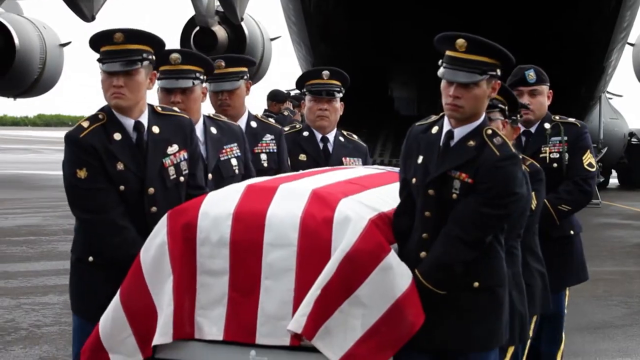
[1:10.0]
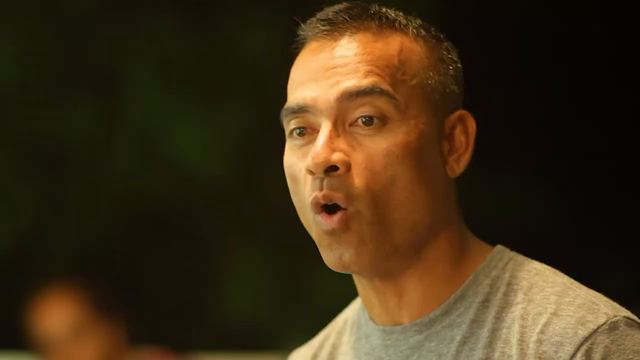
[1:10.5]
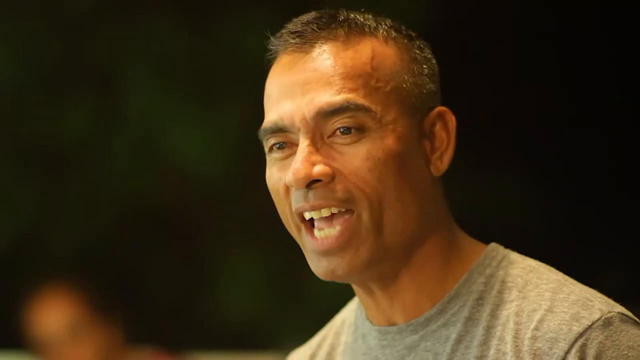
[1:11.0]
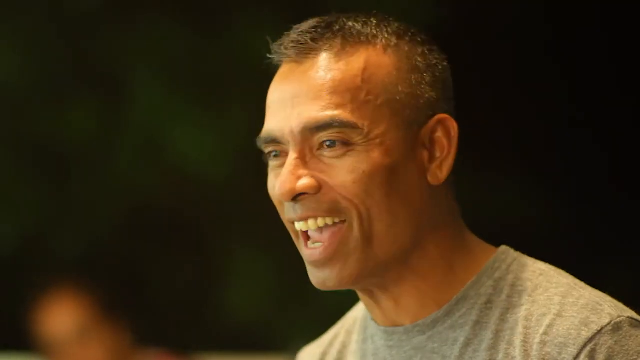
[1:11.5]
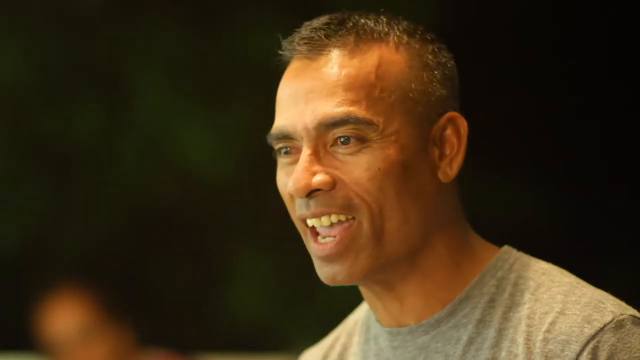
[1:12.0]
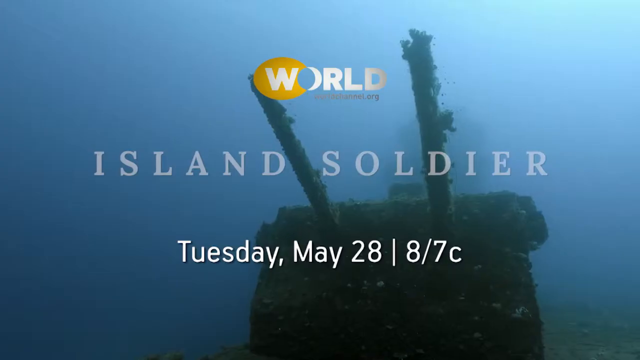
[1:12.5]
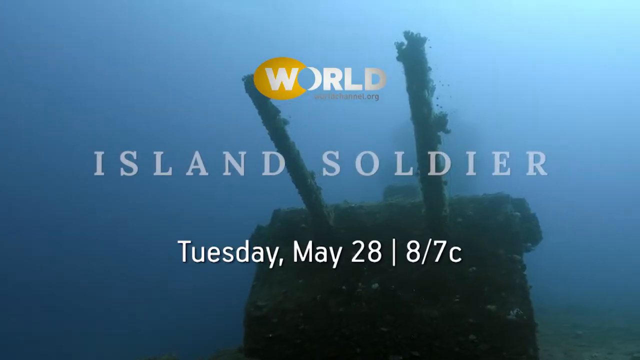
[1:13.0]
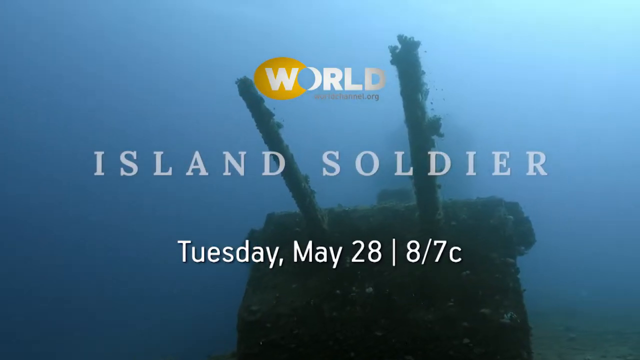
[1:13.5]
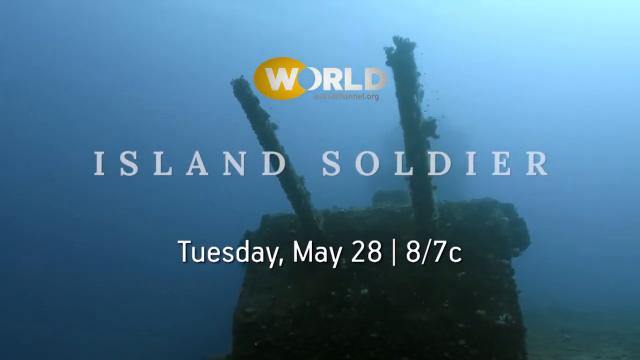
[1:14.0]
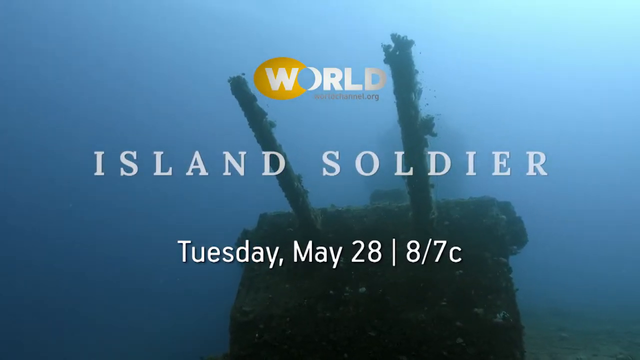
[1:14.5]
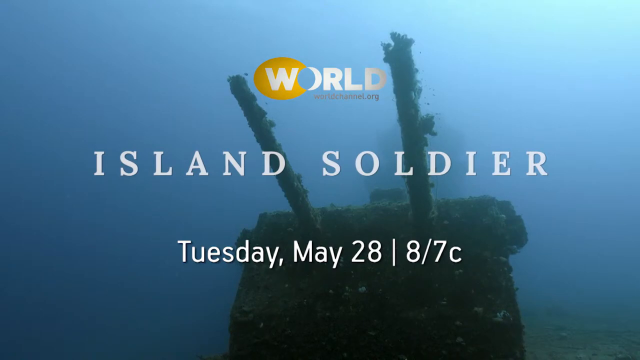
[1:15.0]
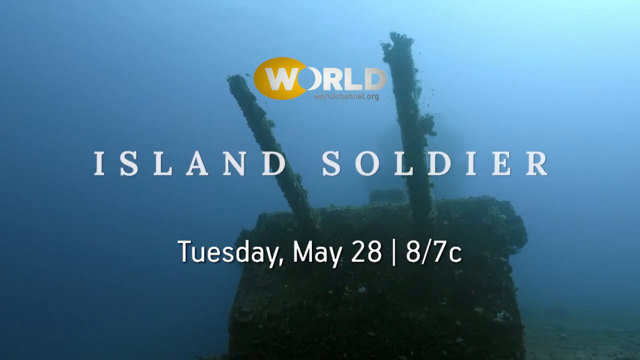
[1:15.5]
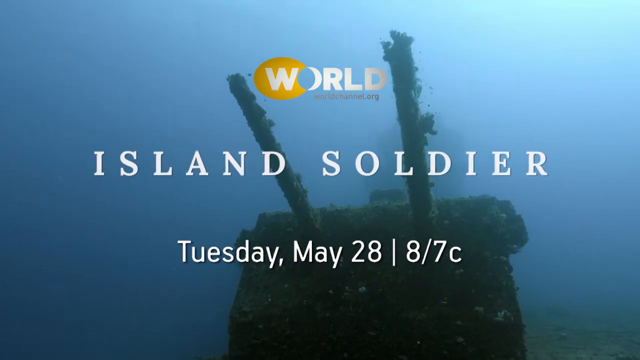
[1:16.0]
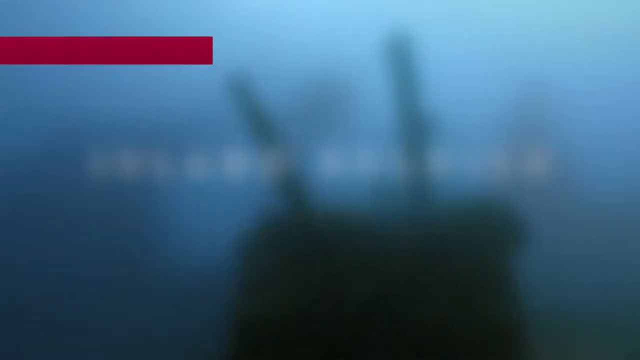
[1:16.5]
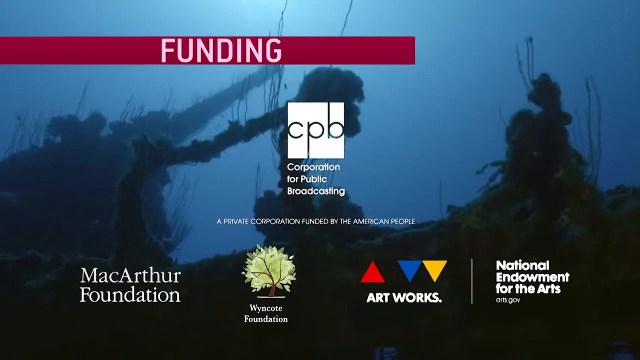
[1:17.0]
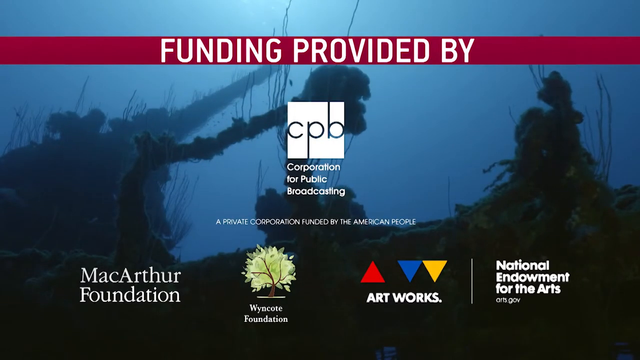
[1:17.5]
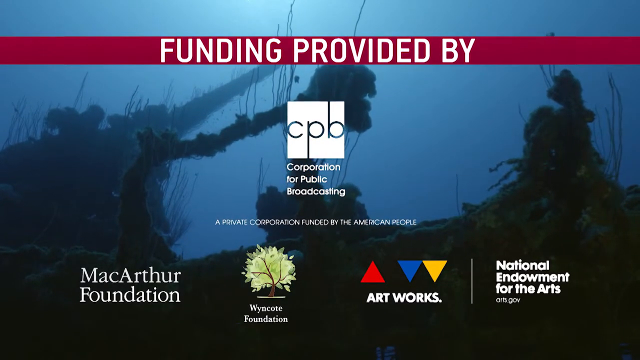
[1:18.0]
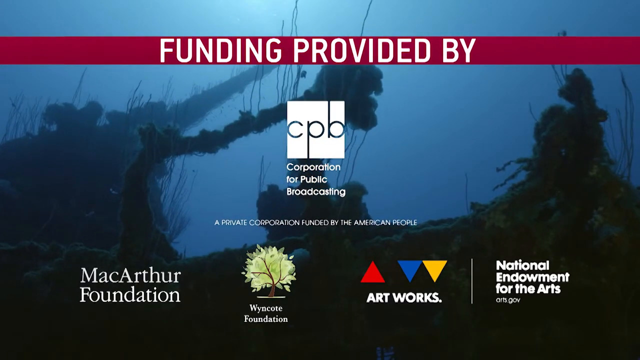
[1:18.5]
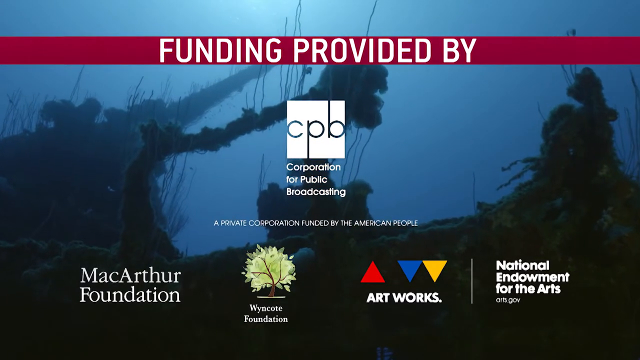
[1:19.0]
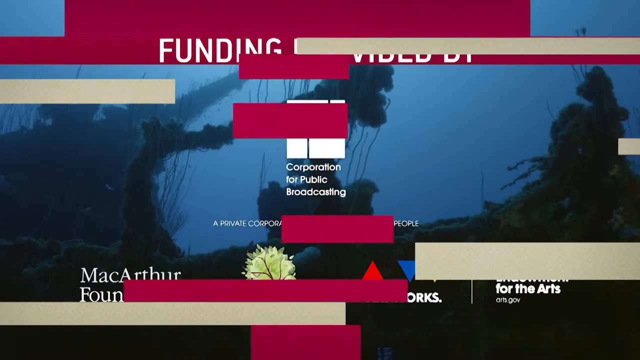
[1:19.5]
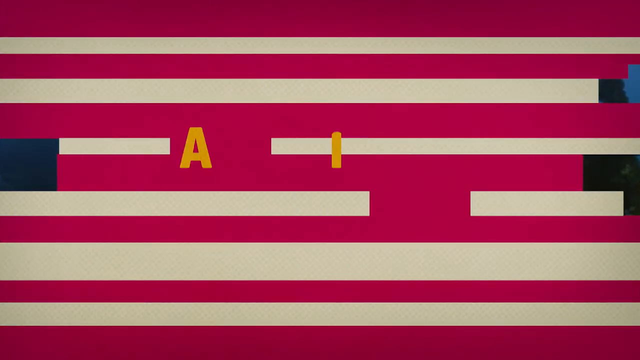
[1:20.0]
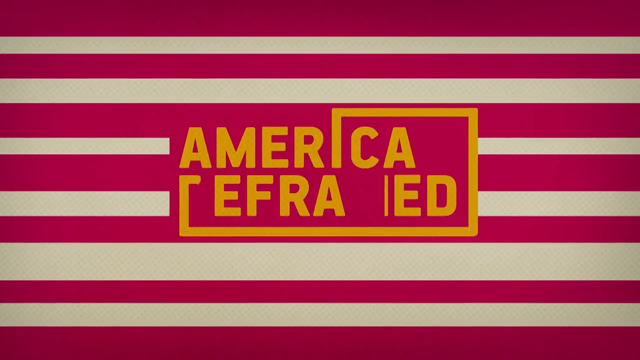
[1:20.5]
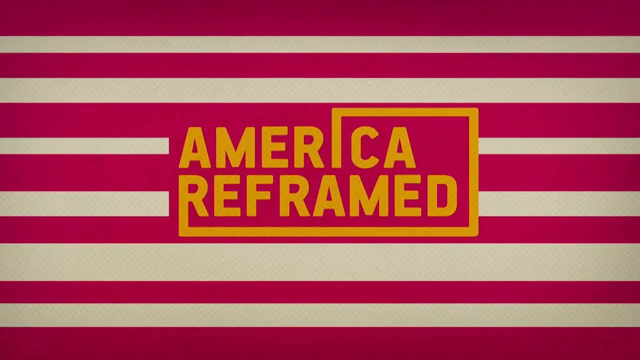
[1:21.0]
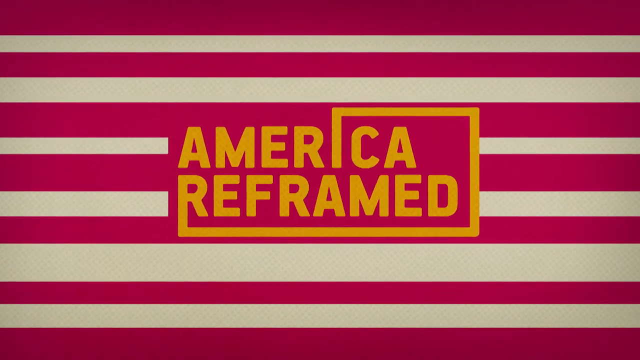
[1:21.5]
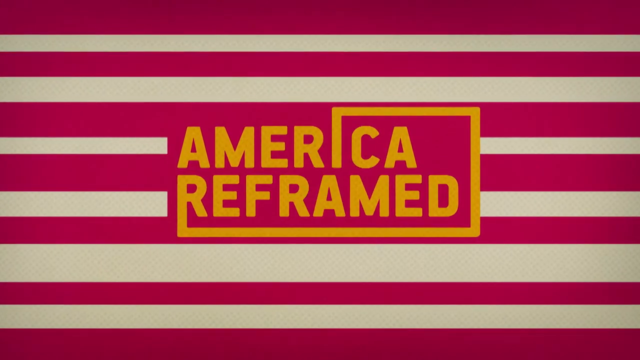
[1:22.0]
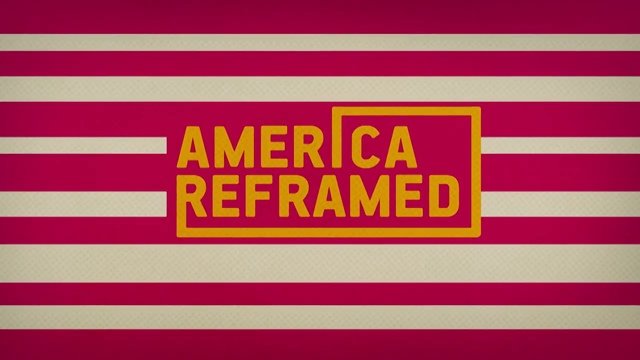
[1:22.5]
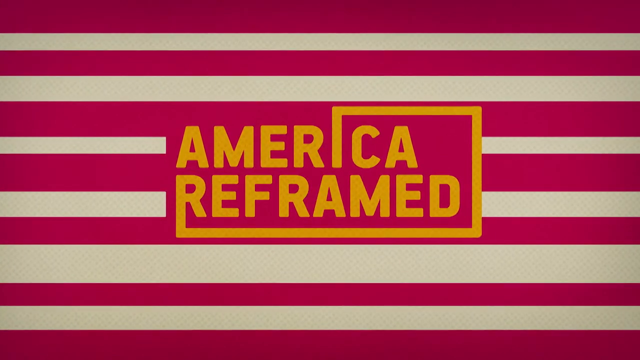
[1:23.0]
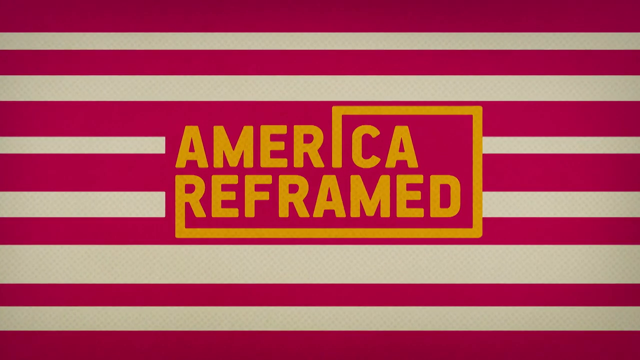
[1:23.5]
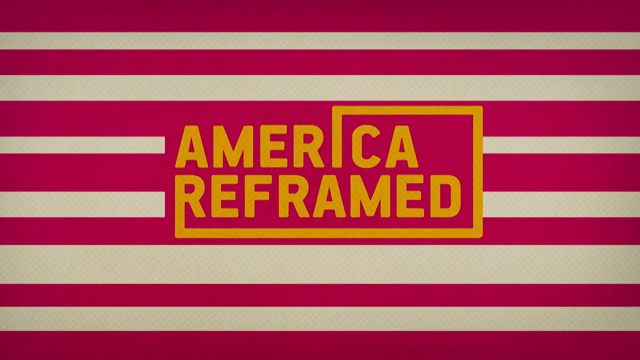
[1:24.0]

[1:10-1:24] Eight men carry a casket, all dressed in black military ceremonial uniforms with black caps on their heads, their uniforms buttoned up and medals on their chests. The casket is covered with the American flag, and the large military cargo plane from which they carried it is in the background behind them. The men continue carrying the casket. The scene then changes to a side profile of a man with short cropped hair and balding edges, who talks and shows his teeth. Finally, the screen changes to a blue screen with a military tank that has two gun barrels, with text reading "World Island Soldier. Tuesday, May 28th, 8/7 C."